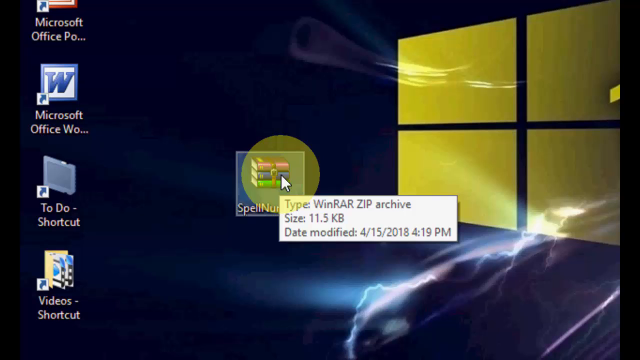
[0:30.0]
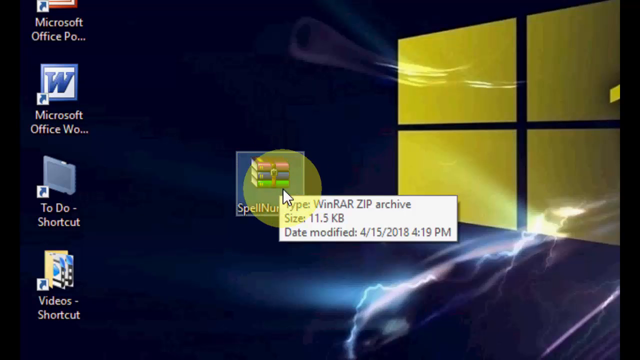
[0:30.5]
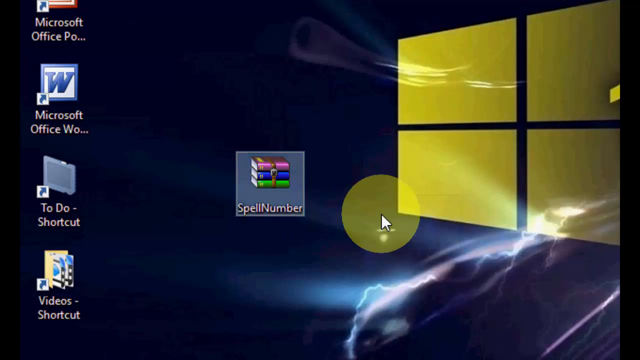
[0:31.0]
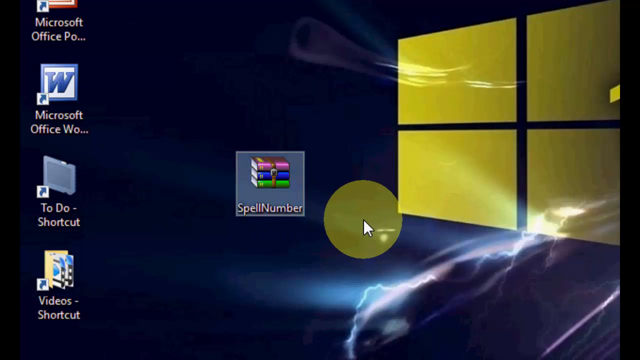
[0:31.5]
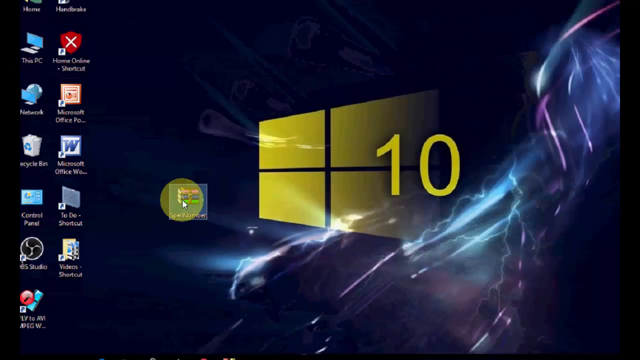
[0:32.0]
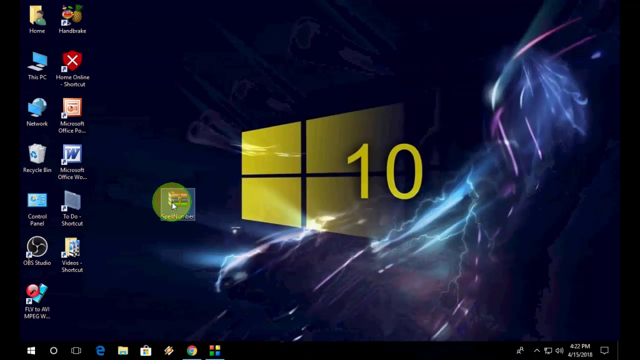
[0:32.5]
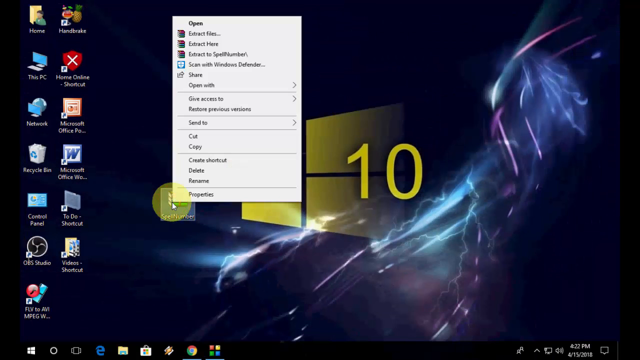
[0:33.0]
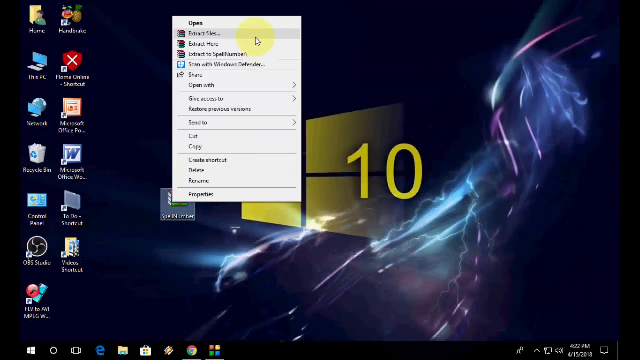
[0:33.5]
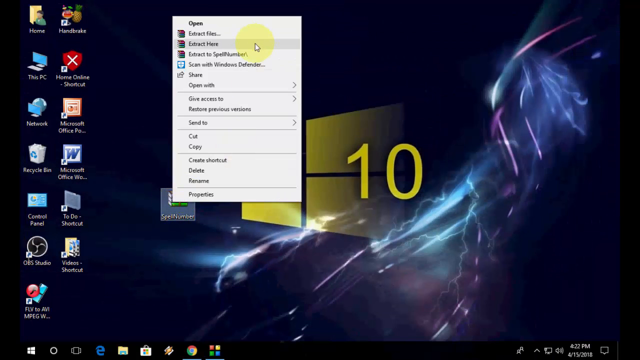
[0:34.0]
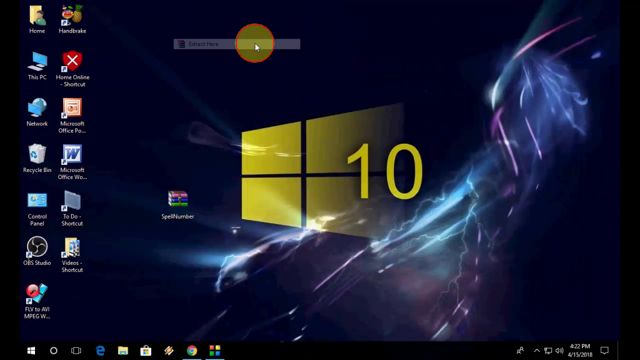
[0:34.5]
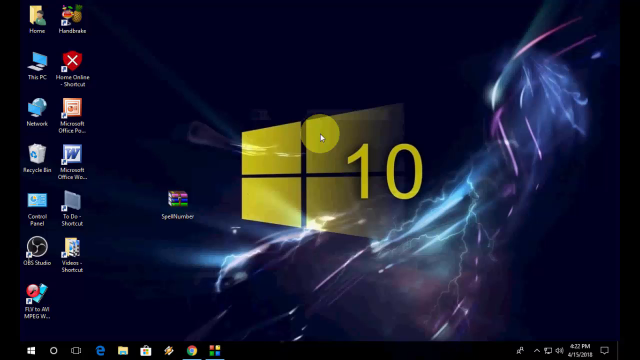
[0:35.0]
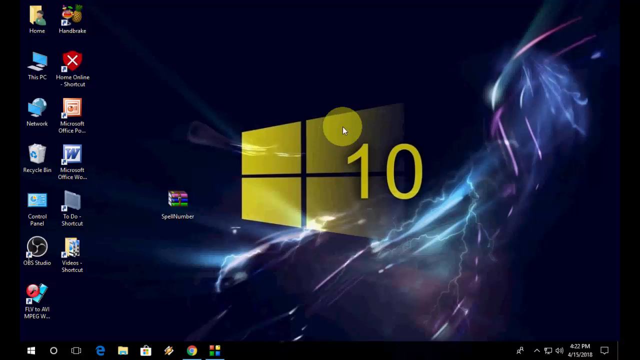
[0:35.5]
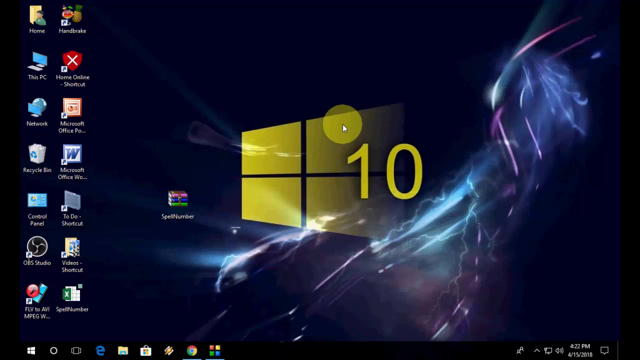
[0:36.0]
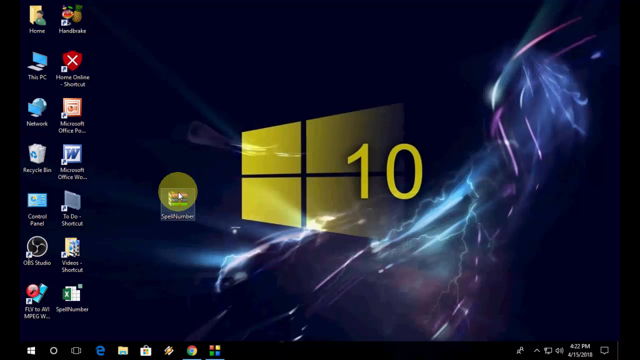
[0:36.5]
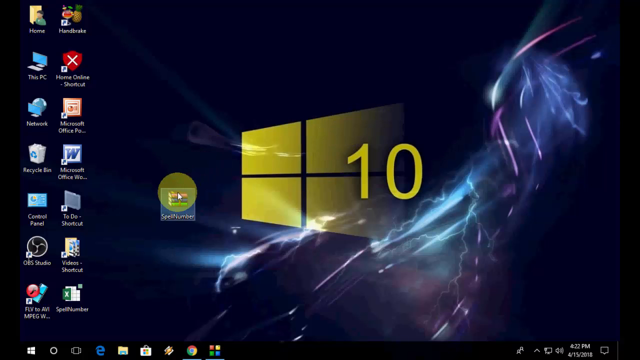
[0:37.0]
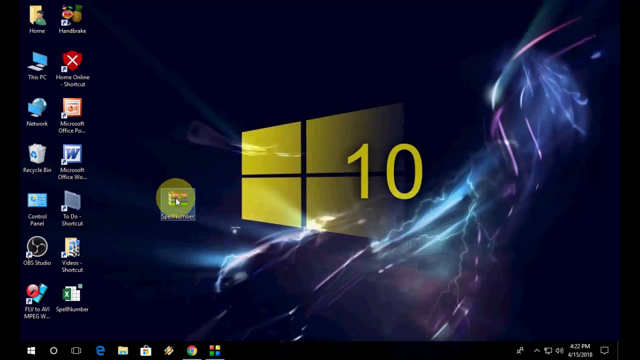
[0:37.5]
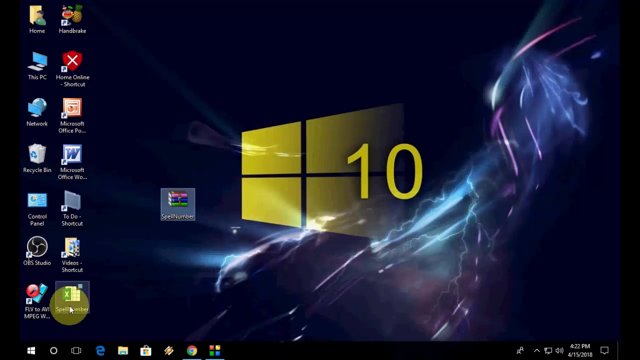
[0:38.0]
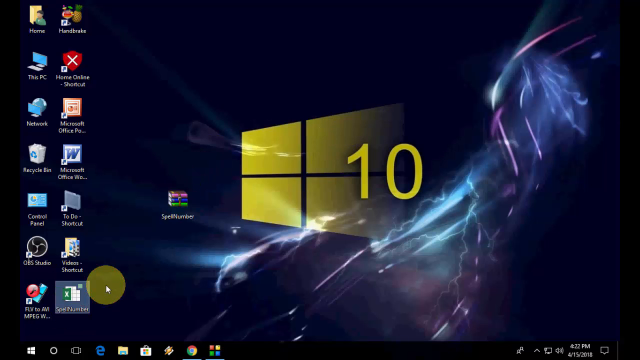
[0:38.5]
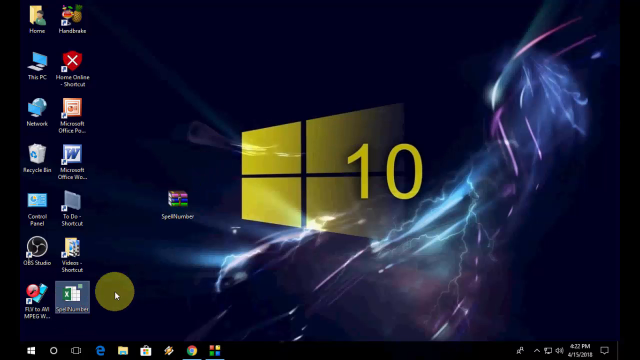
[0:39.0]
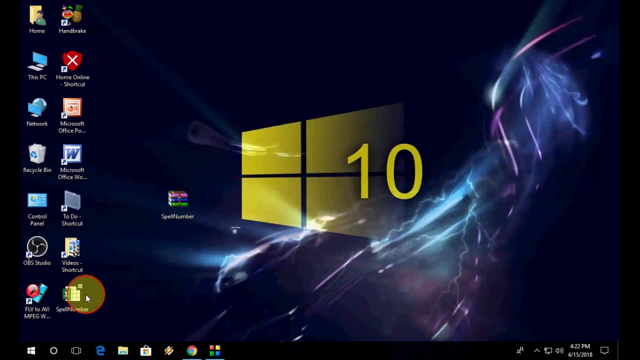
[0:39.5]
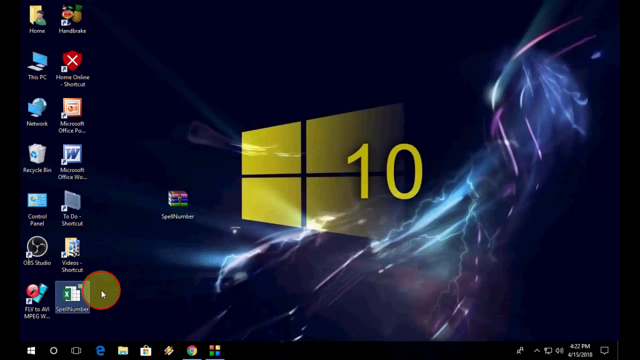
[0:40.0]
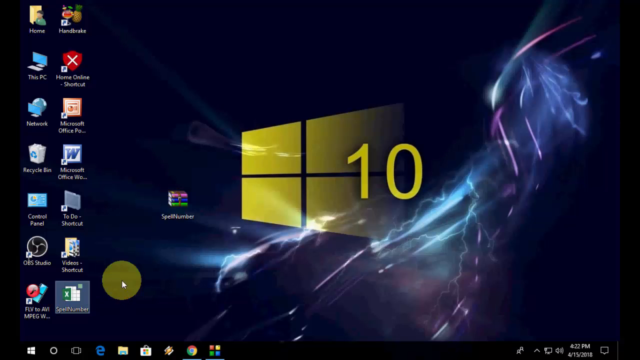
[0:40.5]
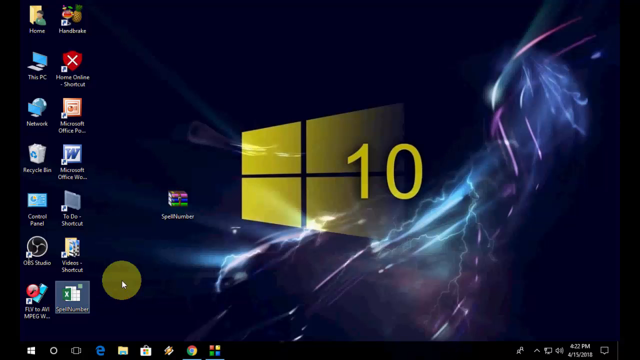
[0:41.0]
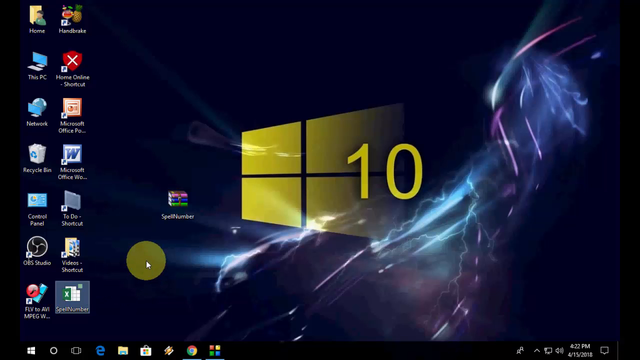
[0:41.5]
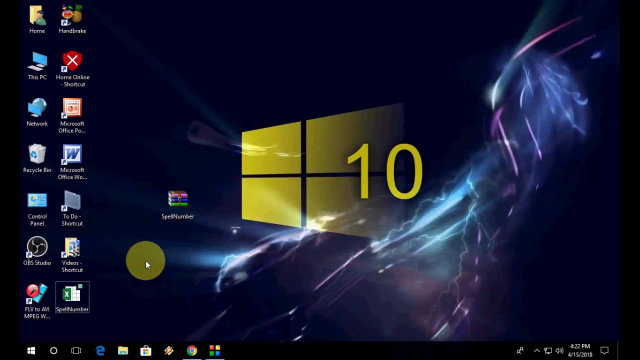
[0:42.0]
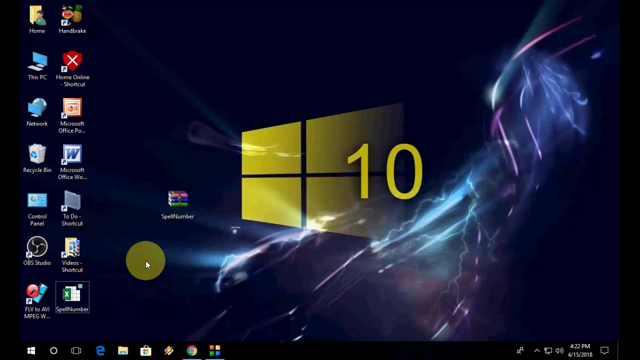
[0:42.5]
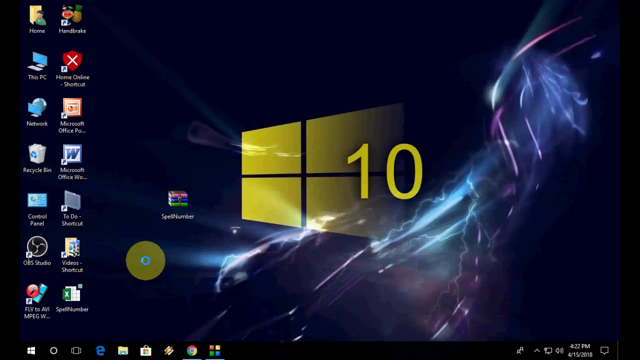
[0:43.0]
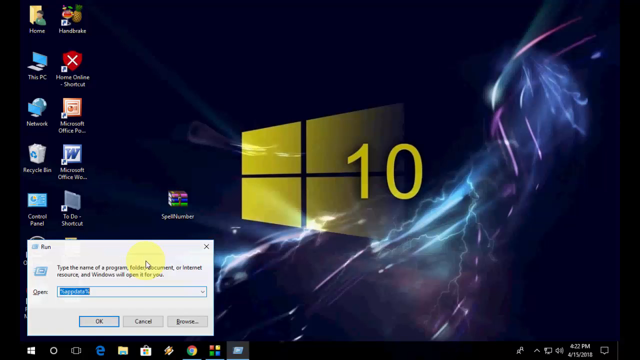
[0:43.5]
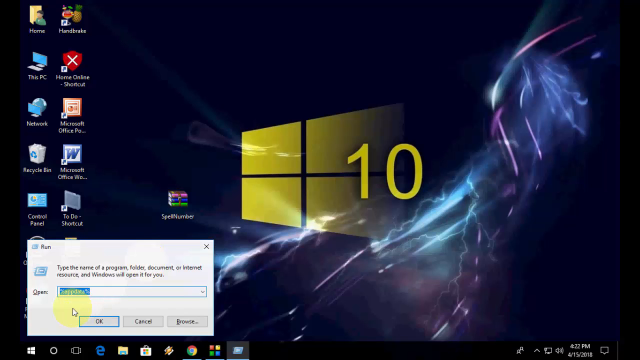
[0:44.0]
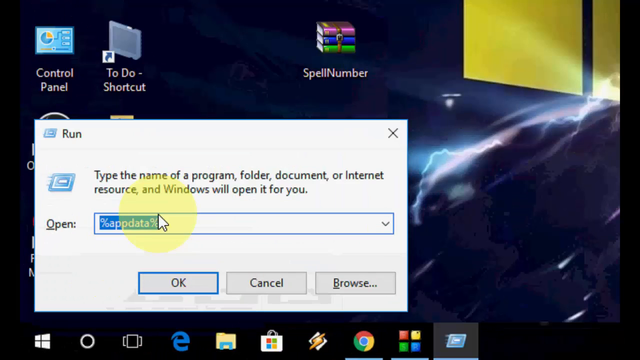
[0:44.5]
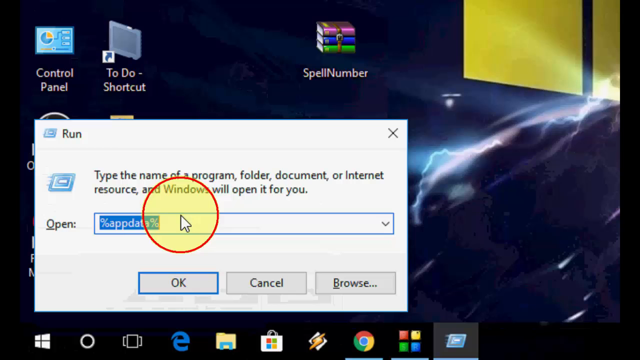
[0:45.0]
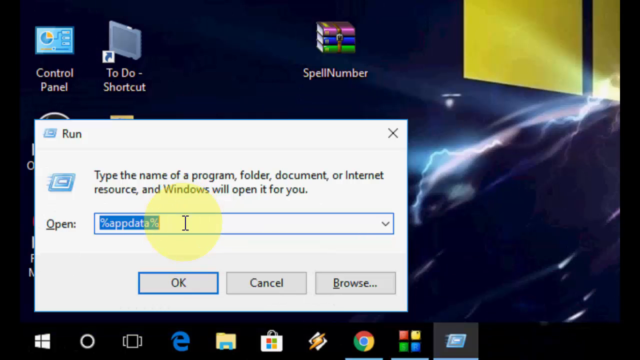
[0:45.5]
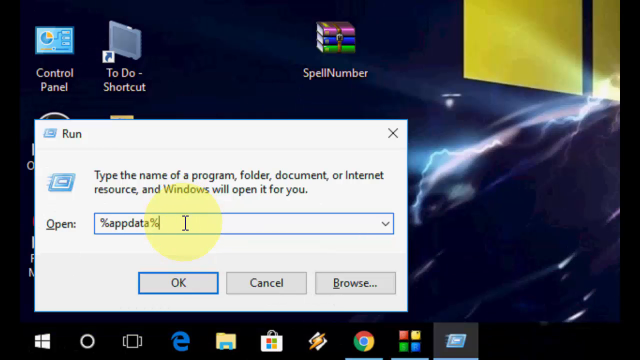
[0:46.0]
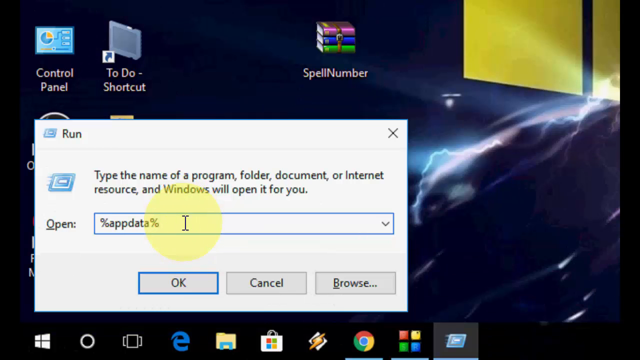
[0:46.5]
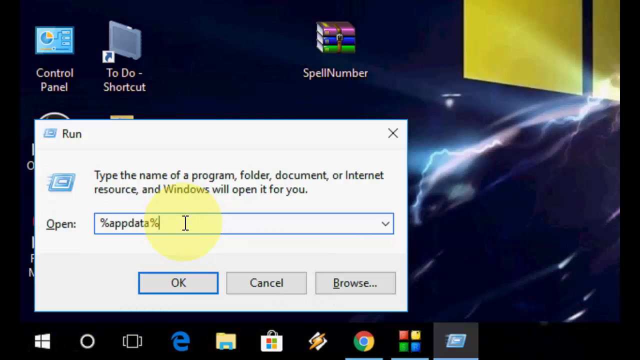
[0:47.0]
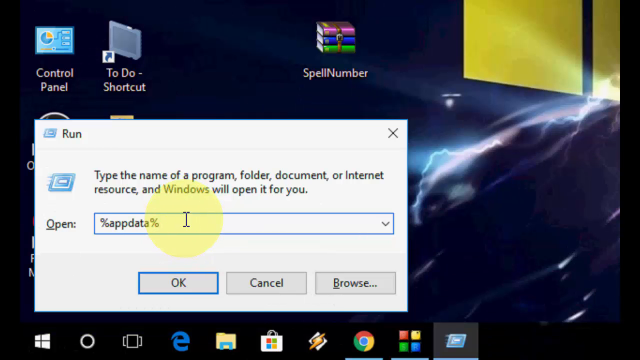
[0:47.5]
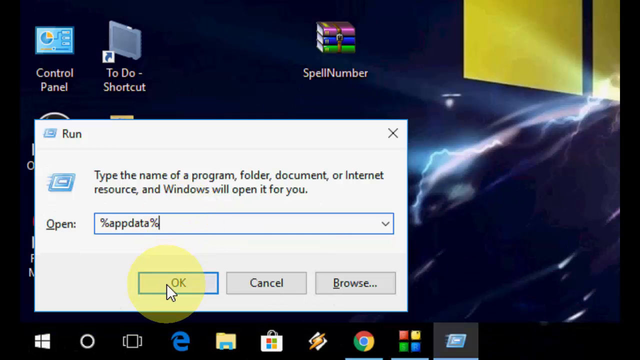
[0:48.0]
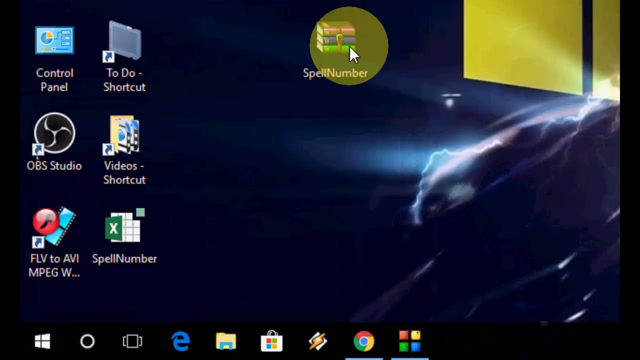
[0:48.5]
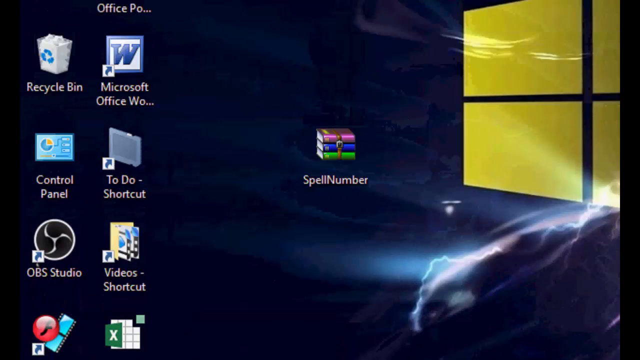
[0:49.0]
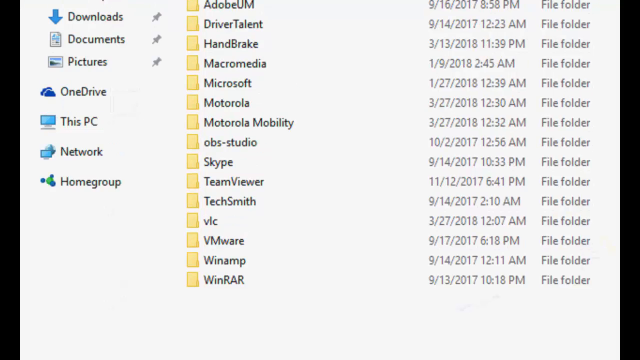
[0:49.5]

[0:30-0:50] The cursor zigzags over the item and moves it closer to the Windows logo. The view zooms out twice, a pop-up window appears, and Extract Files is chosen. The cursor zigzags at the very bottom. The icons have moved, and Microsoft Excel is now at the very bottom of the column. The Run pop-up window is opened and the view is enlarged to a zoomed-in picture of it; "%app data%" has been typed in, and Okay is clicked, bringing up a gigantic view of the files, which is scrolled down. It looks like Windows Explorer has been opened and the window pane is being moved down.